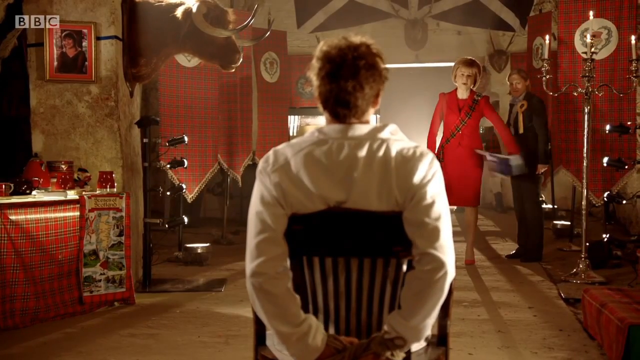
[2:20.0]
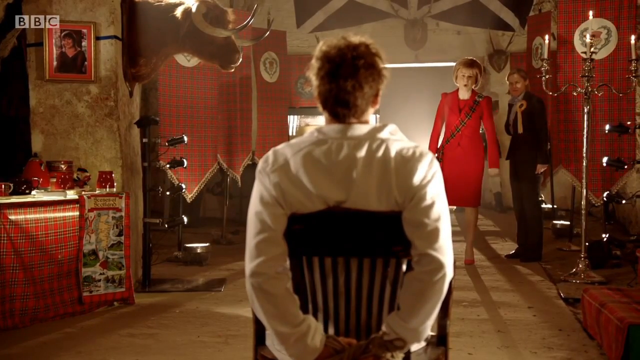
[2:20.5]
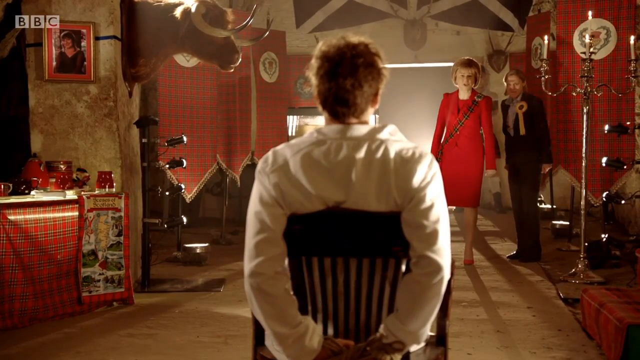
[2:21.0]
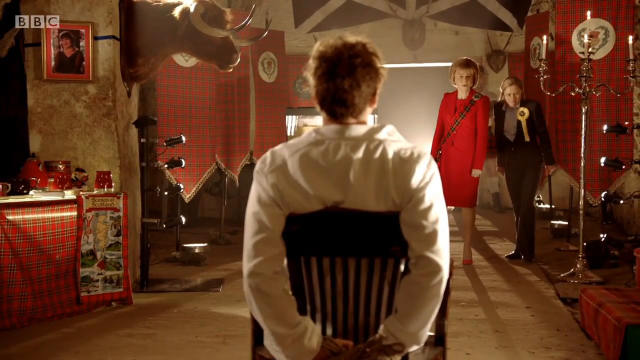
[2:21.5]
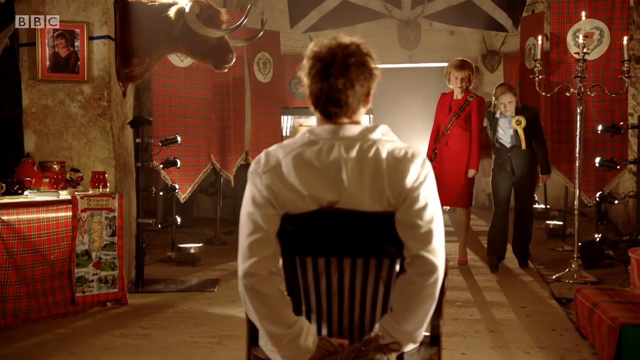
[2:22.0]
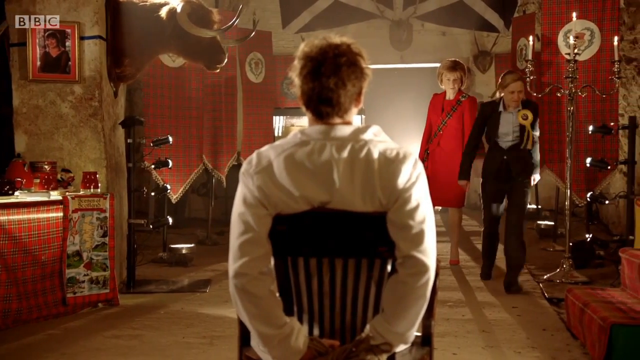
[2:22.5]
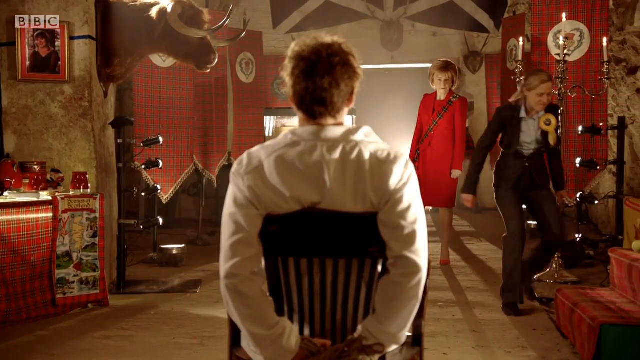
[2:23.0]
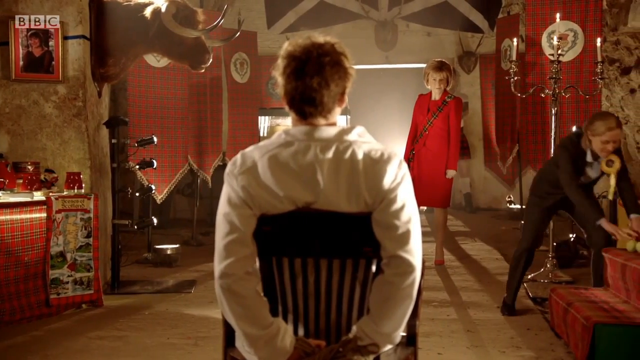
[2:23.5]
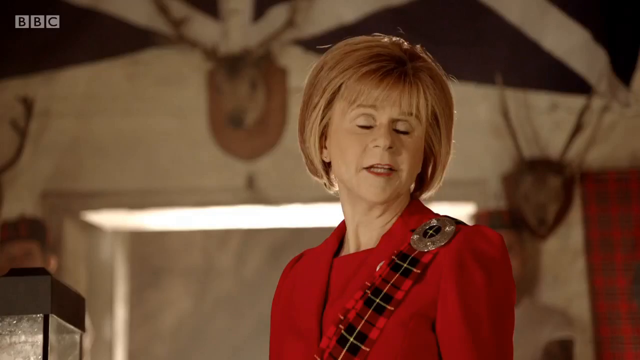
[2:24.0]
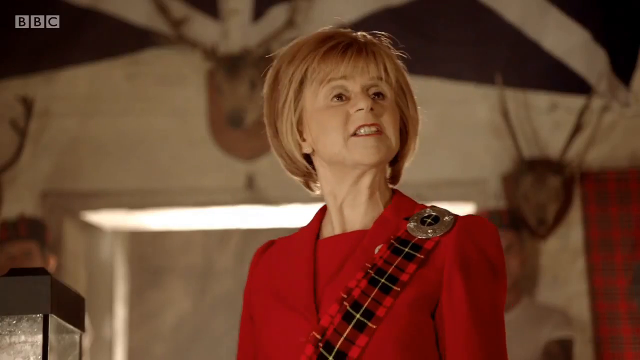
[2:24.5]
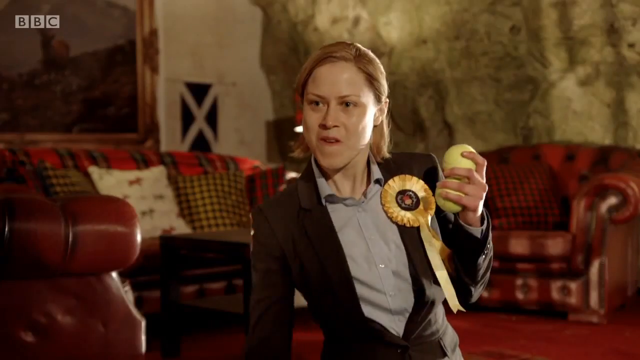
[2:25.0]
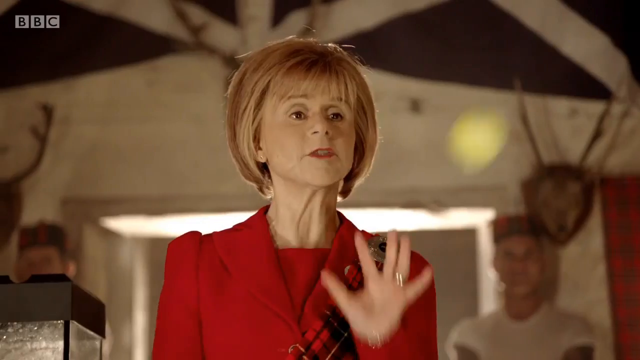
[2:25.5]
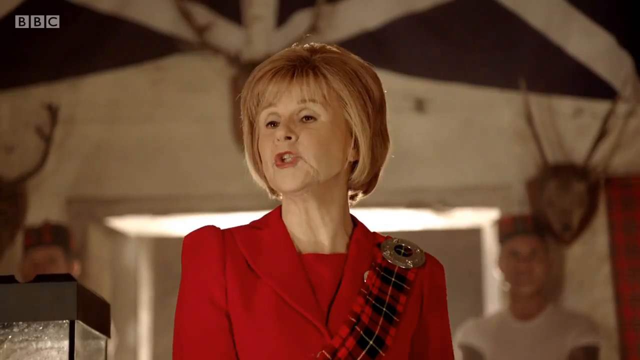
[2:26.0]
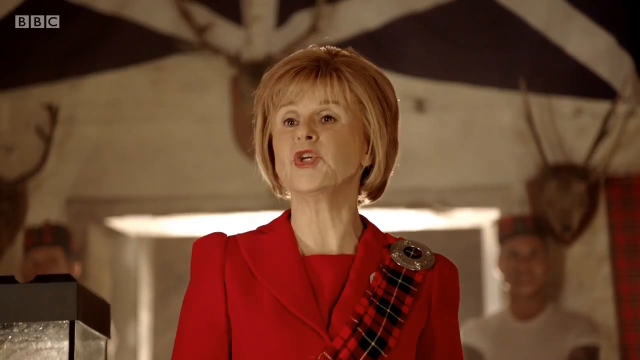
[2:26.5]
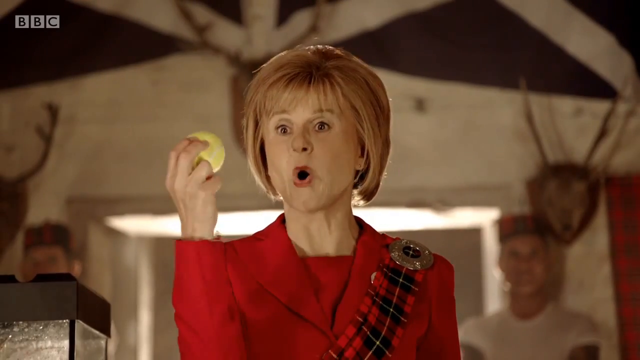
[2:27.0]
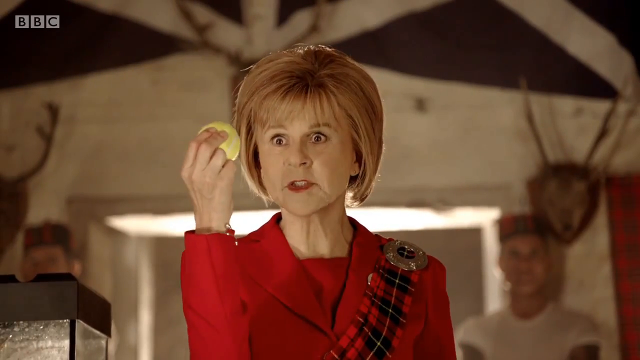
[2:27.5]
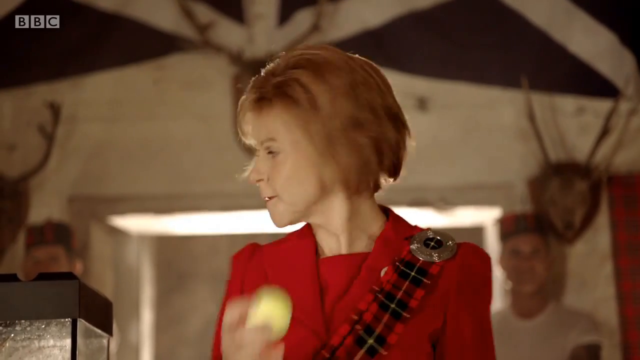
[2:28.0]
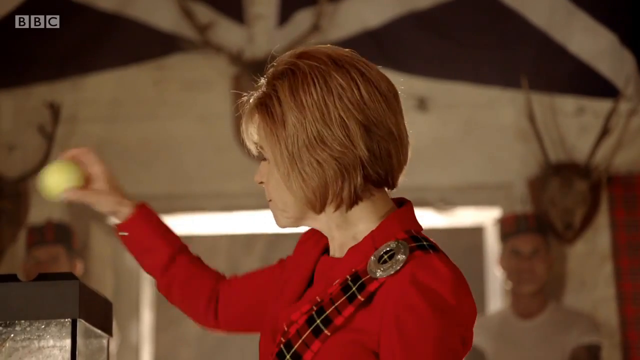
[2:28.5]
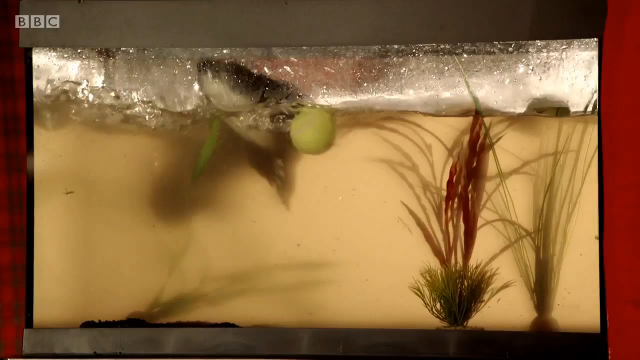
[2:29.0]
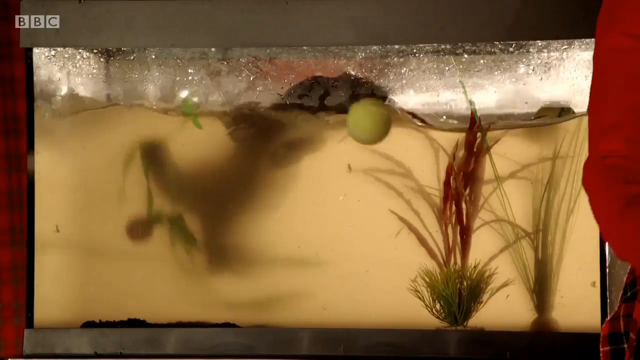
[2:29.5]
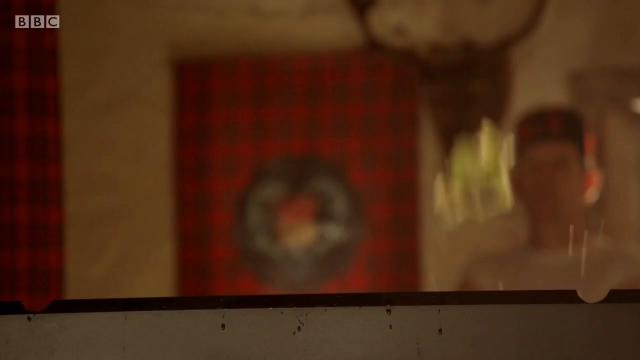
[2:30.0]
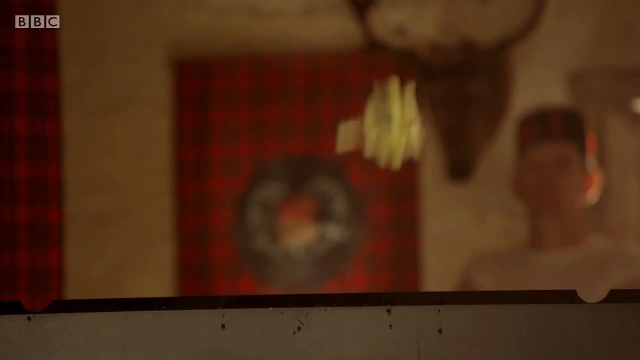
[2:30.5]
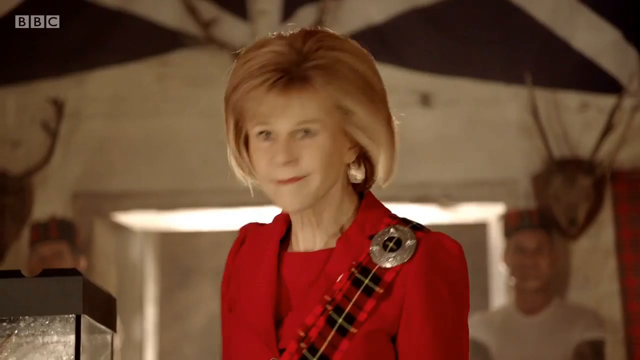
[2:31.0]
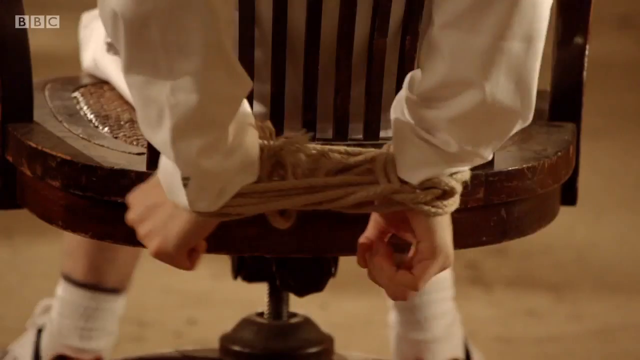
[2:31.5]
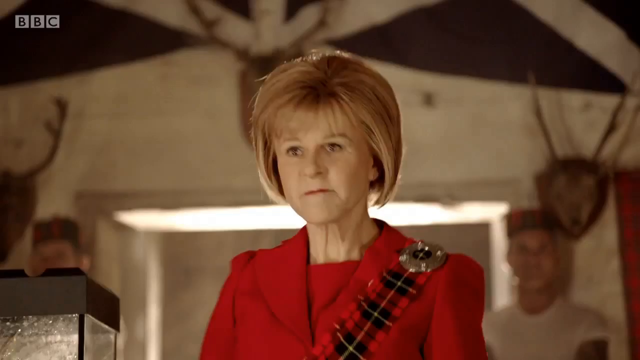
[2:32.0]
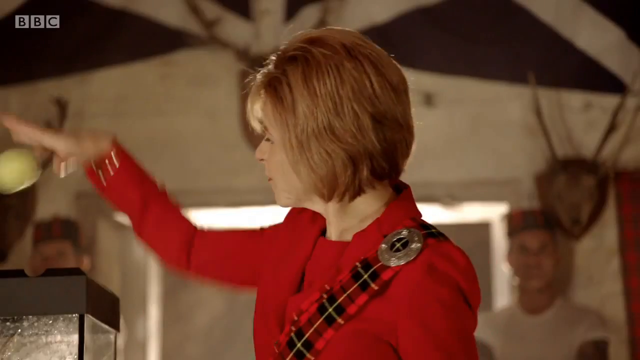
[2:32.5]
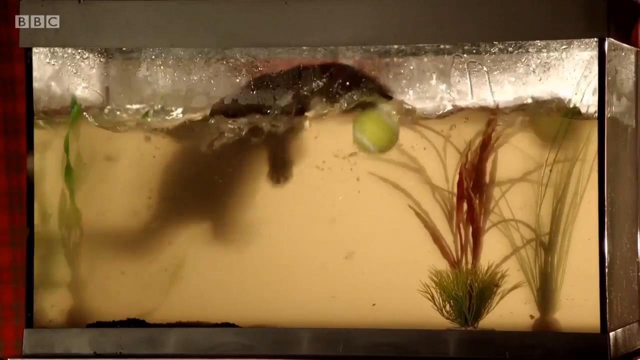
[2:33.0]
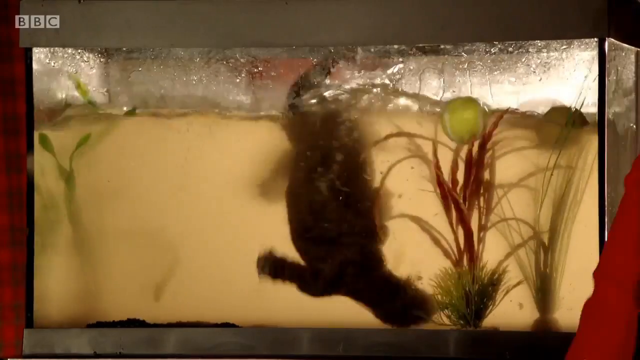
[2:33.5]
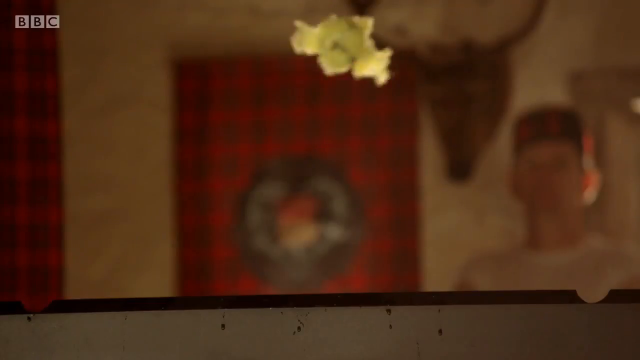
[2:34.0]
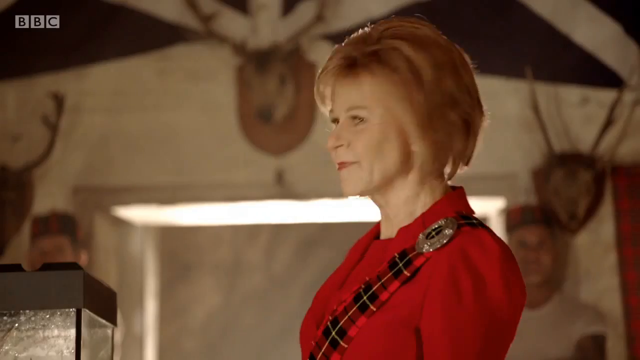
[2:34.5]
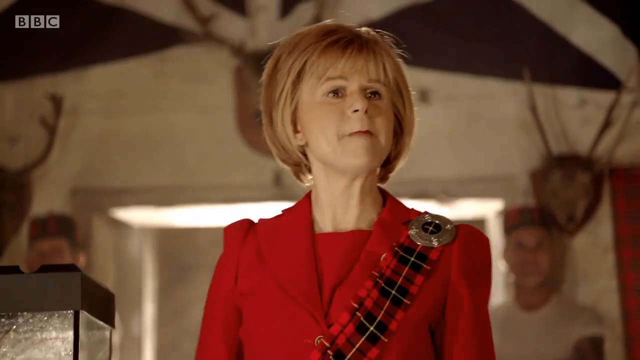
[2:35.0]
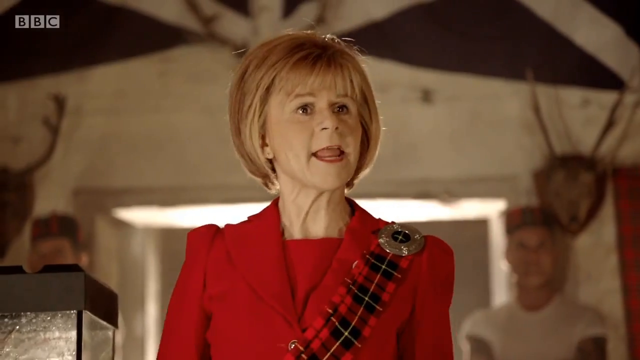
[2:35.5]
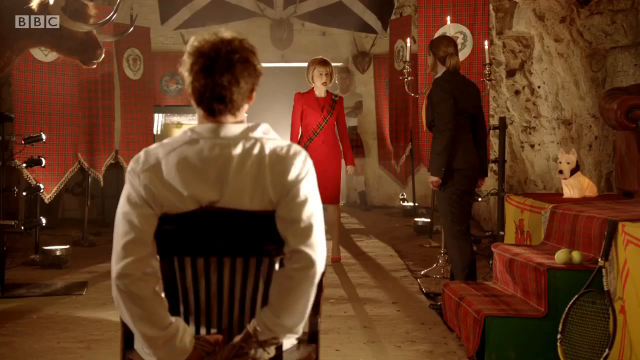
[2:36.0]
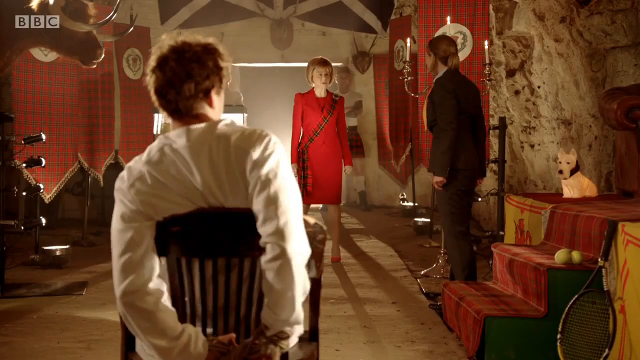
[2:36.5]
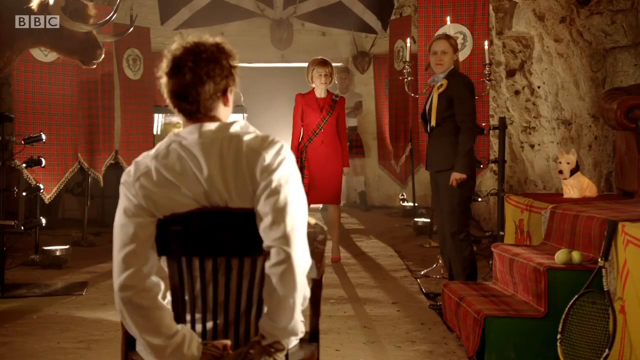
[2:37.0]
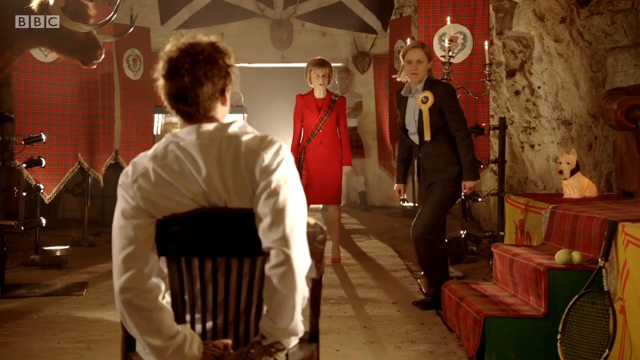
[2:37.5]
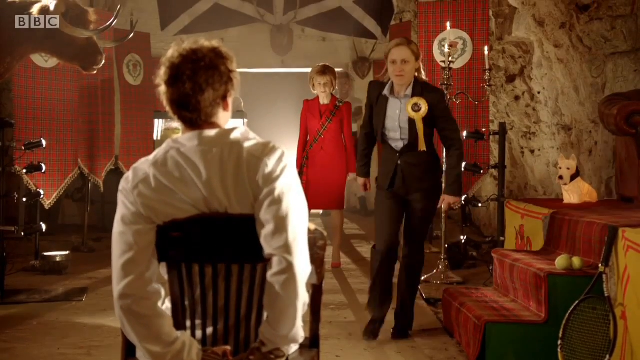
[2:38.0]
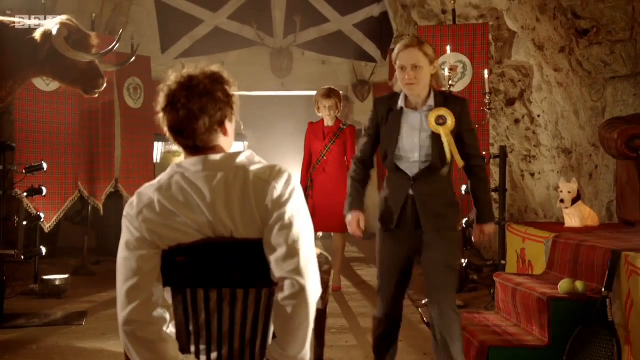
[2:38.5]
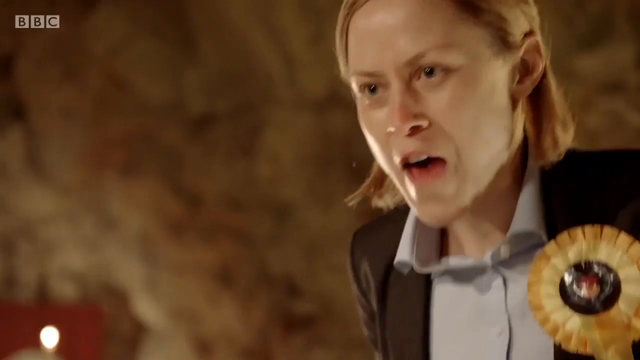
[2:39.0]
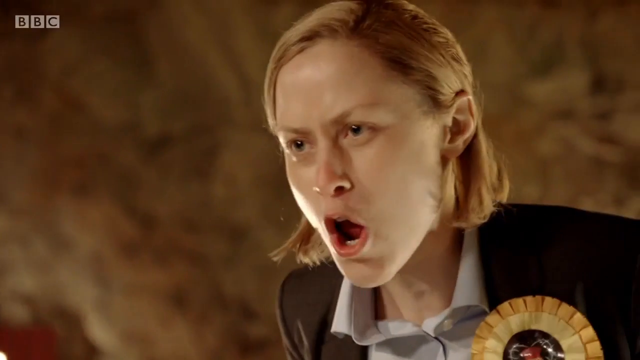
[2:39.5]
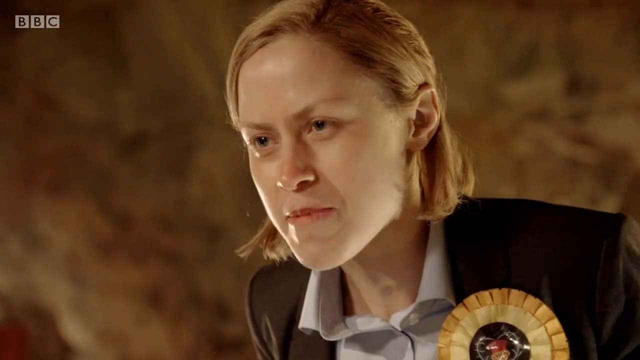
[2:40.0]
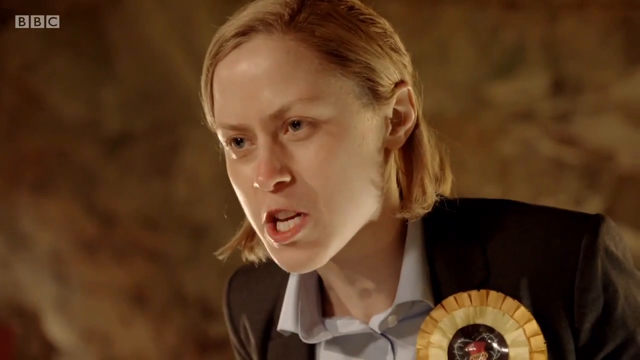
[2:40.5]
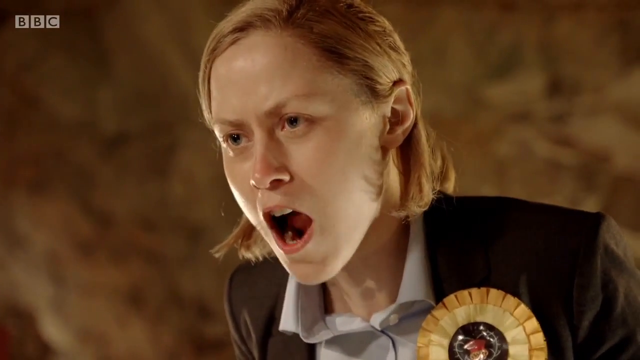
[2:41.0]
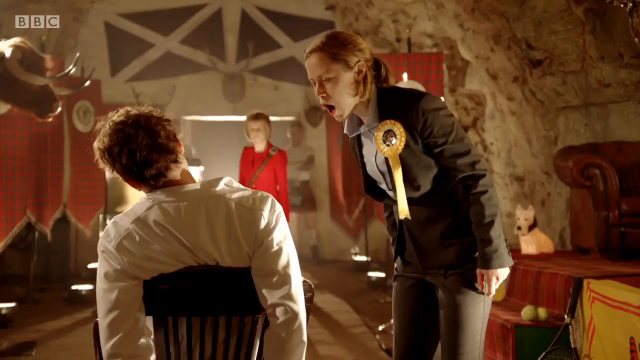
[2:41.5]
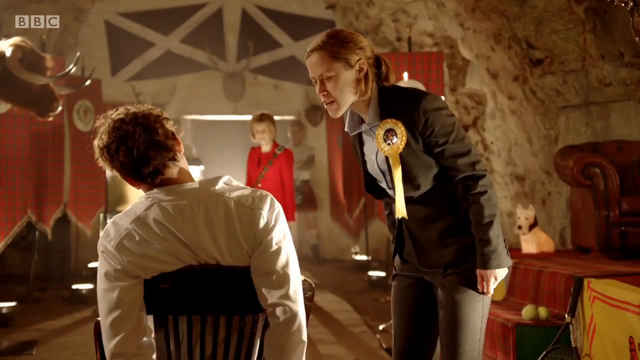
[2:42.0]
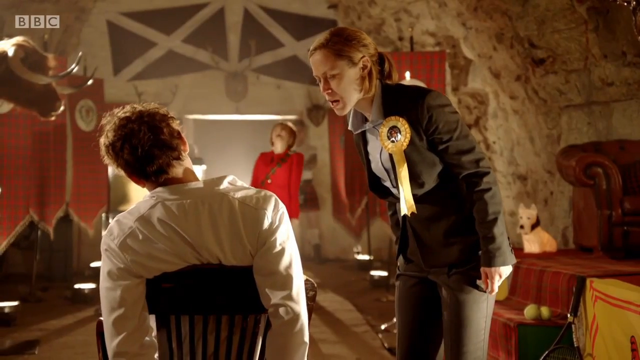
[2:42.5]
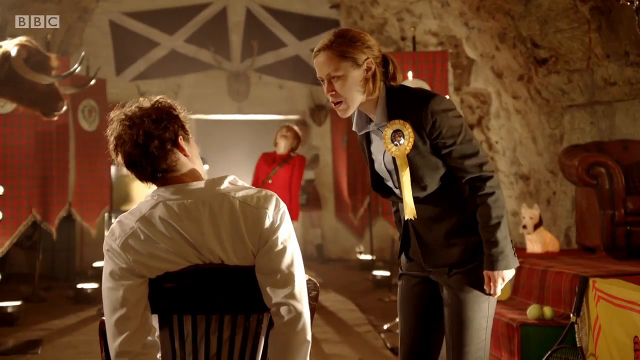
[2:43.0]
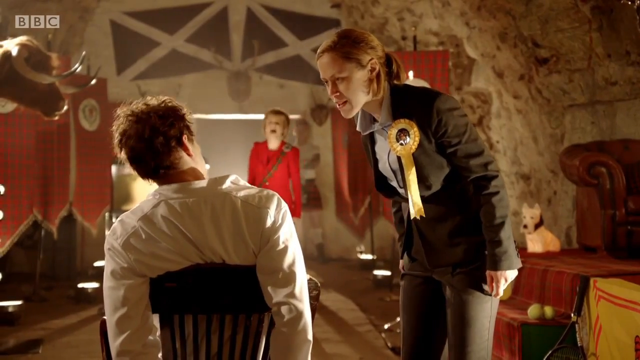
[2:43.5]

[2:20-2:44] A shot includes three people: a man positioned backwards from the camera, and in front of him two women, one dressed in red and the other in black. The woman in black moves away from the first woman and goes to the right end of the shot, bending over. In the next shot, the woman in red talks to someone outside the shot. The woman in the black jacket then throws a very light yellow object to the other person in the room, who throws it into an aquarium containing an unidentified animal. The animal swims in the aquarium, which is full of dirty water. The man tied to the chair tries for a few seconds to free himself. In the last seconds, the woman in the black jacket quickly approaches the man.